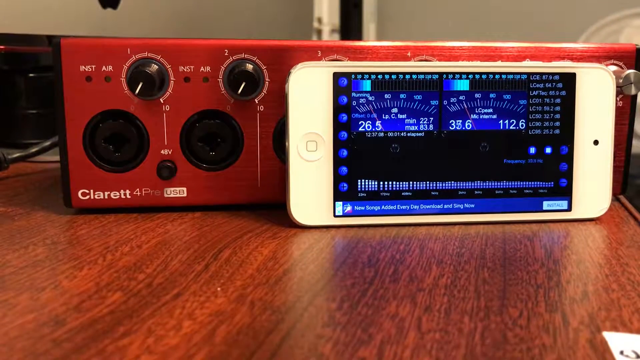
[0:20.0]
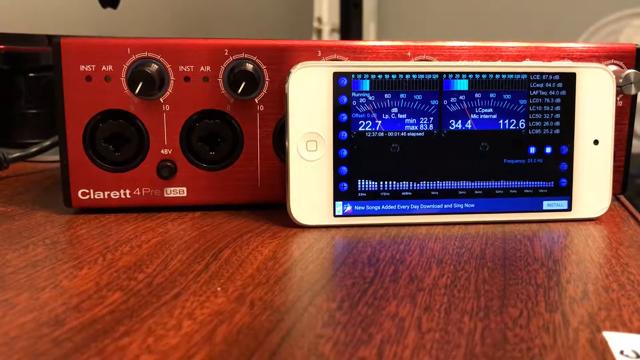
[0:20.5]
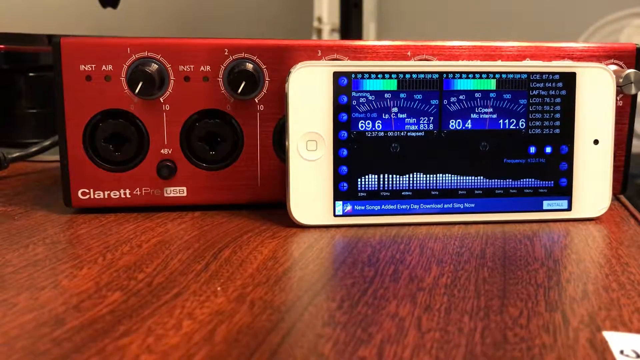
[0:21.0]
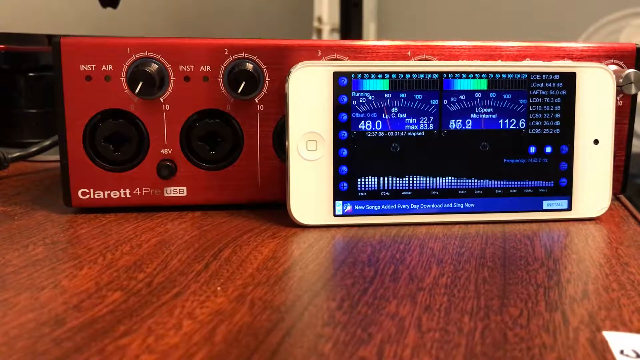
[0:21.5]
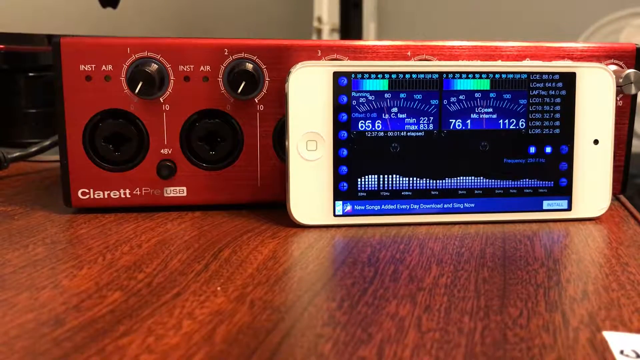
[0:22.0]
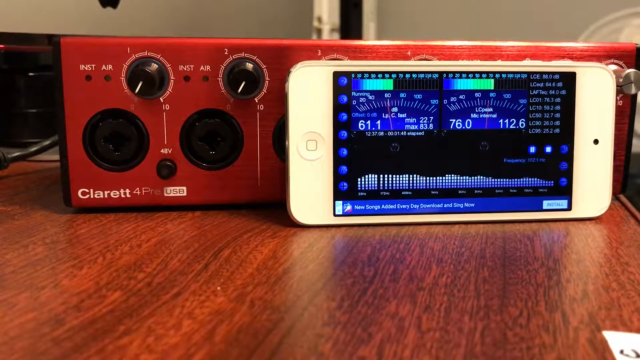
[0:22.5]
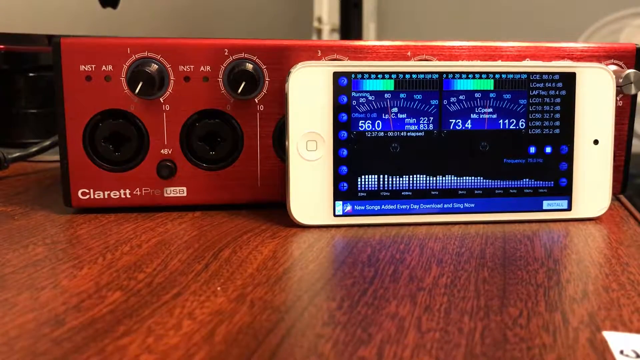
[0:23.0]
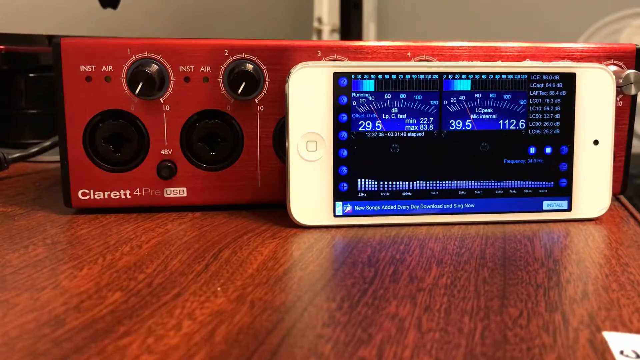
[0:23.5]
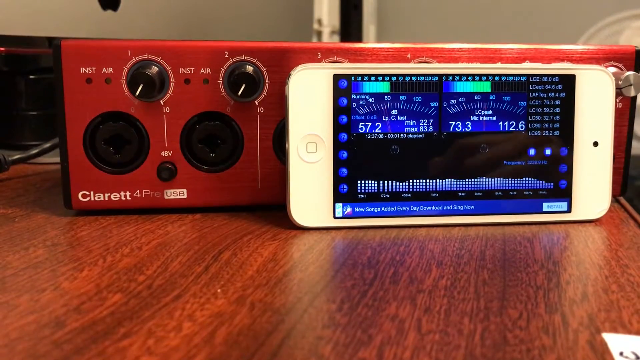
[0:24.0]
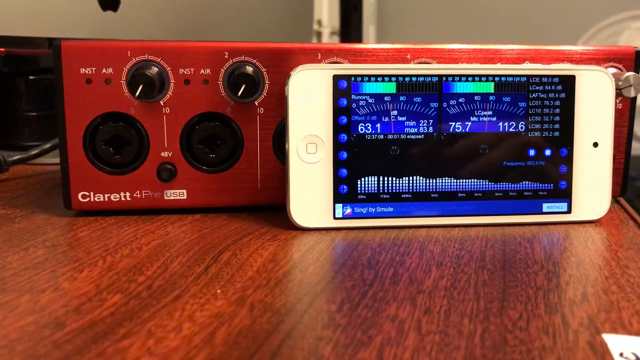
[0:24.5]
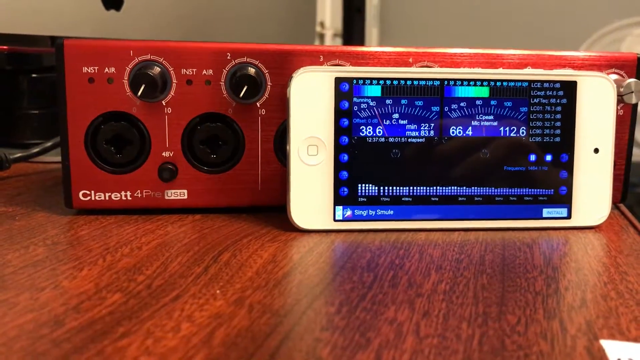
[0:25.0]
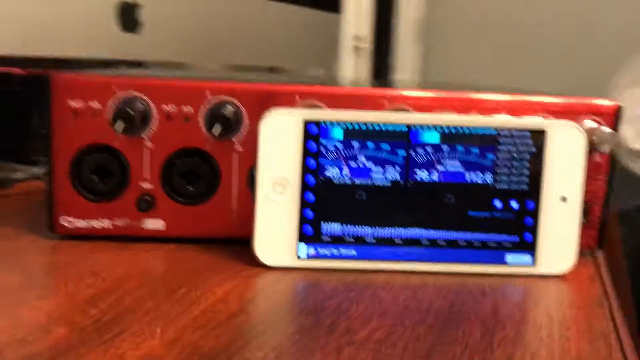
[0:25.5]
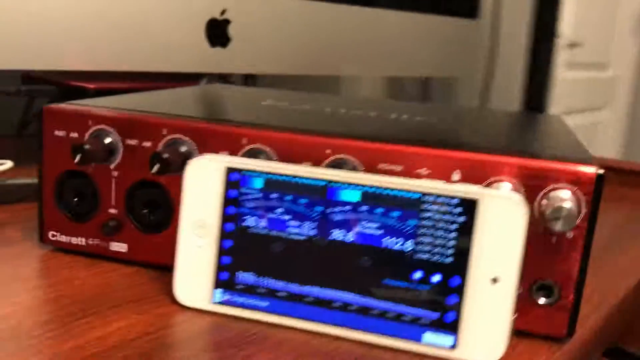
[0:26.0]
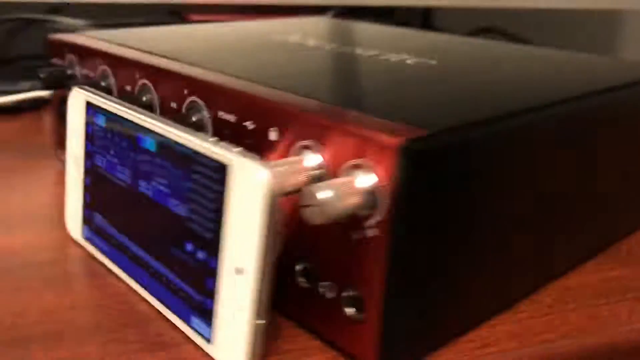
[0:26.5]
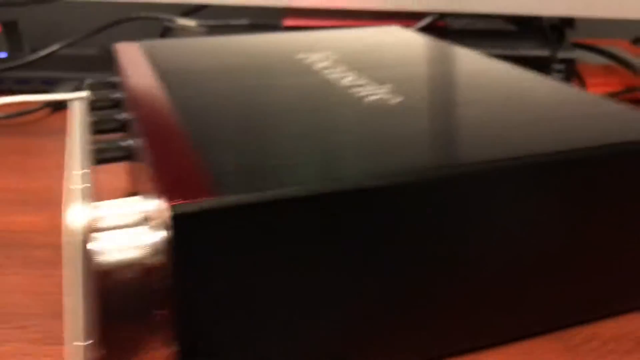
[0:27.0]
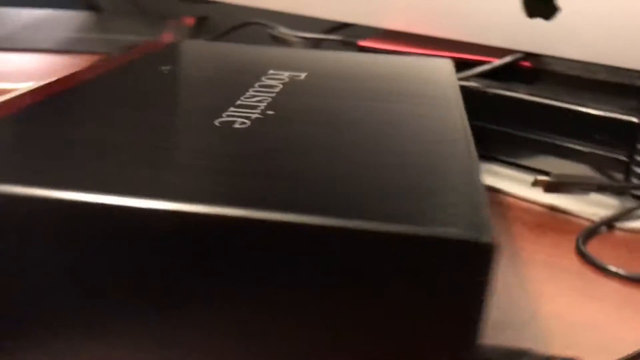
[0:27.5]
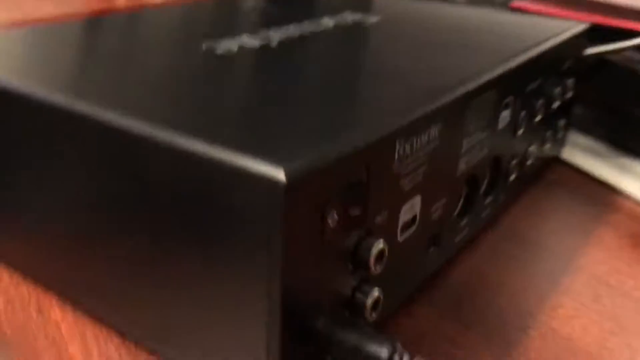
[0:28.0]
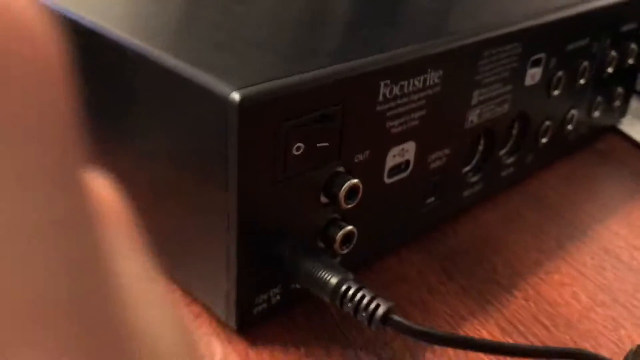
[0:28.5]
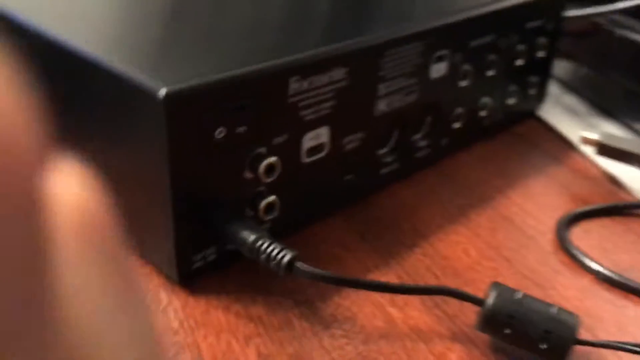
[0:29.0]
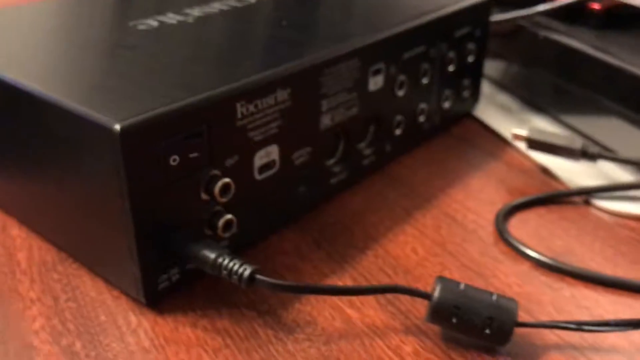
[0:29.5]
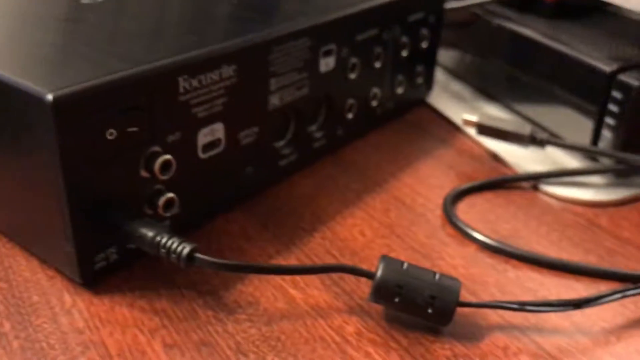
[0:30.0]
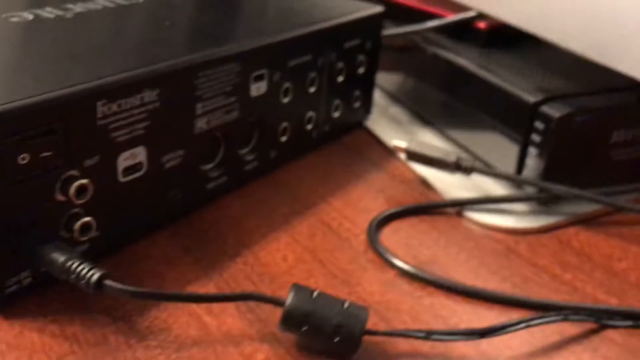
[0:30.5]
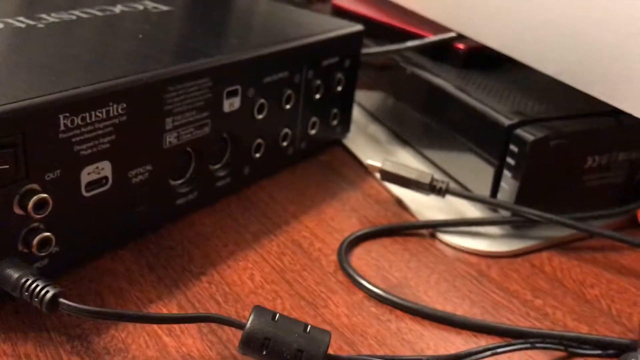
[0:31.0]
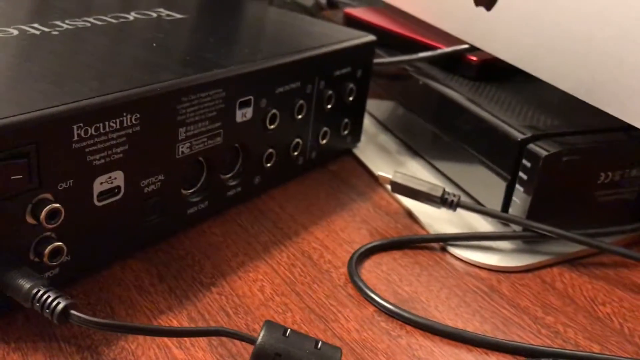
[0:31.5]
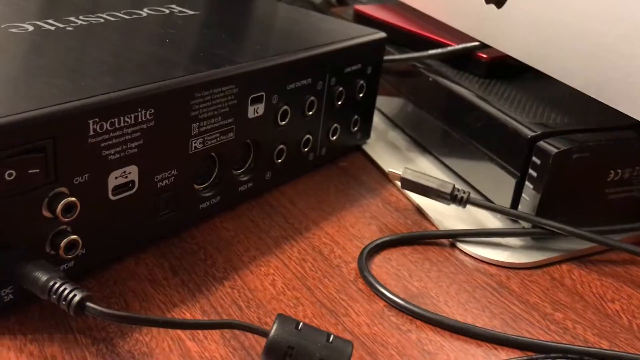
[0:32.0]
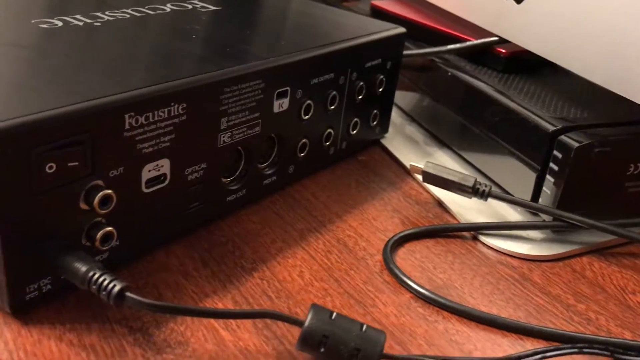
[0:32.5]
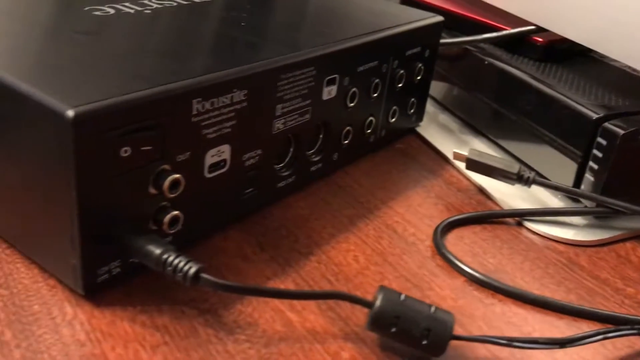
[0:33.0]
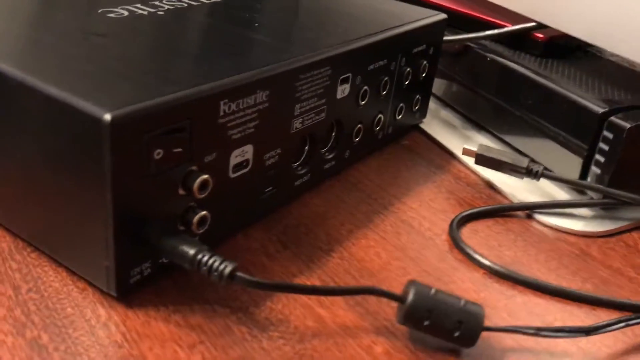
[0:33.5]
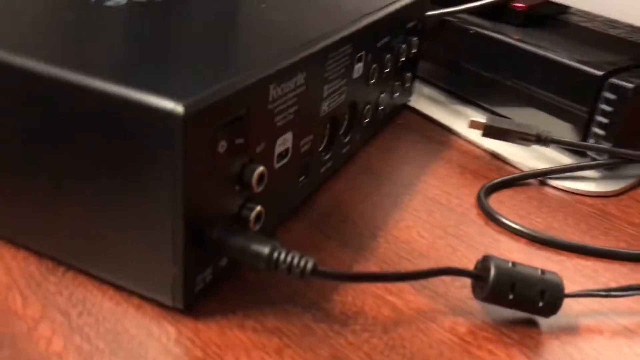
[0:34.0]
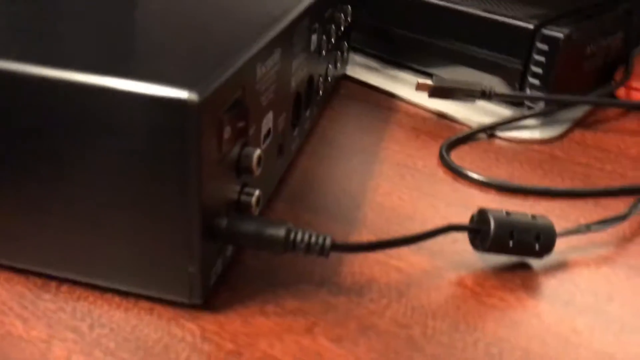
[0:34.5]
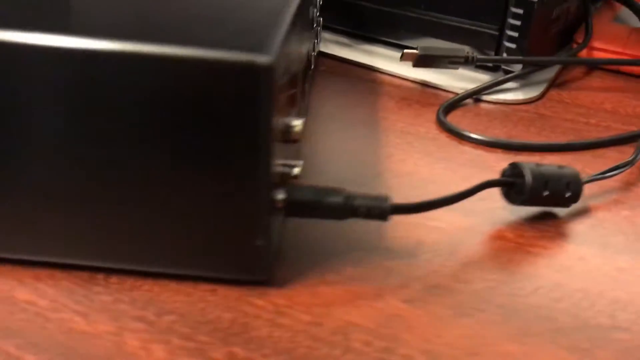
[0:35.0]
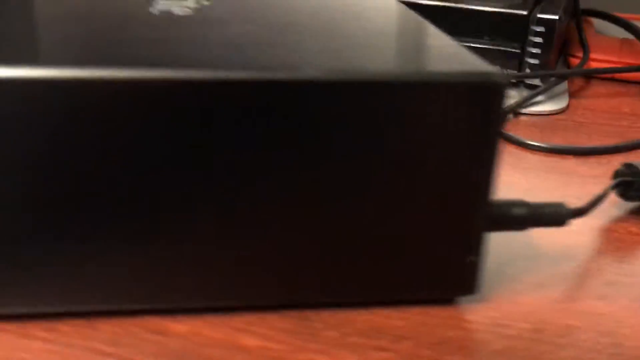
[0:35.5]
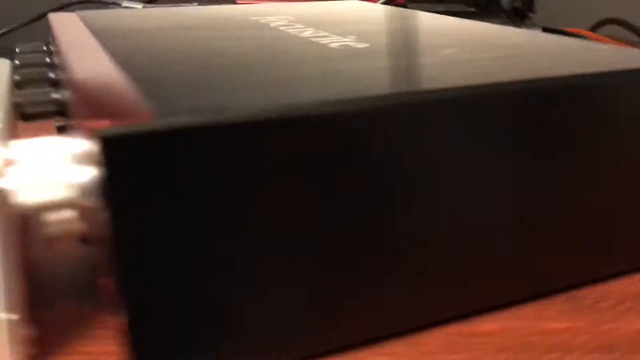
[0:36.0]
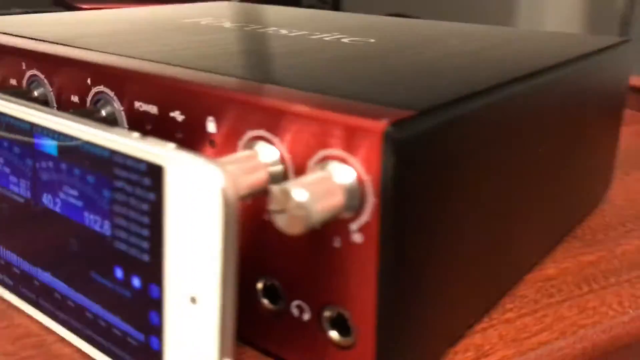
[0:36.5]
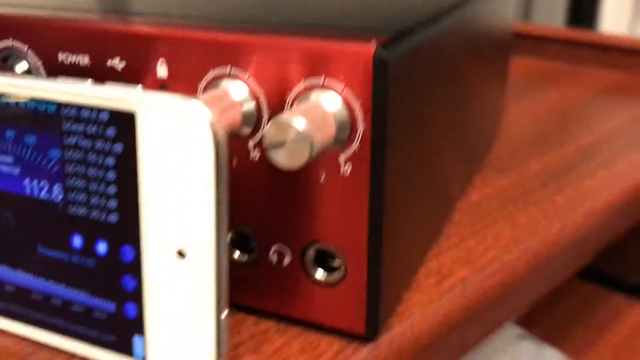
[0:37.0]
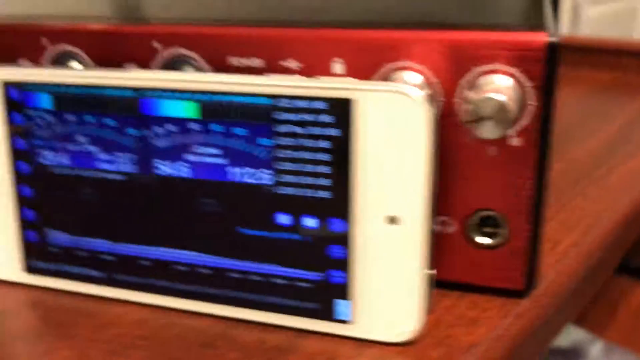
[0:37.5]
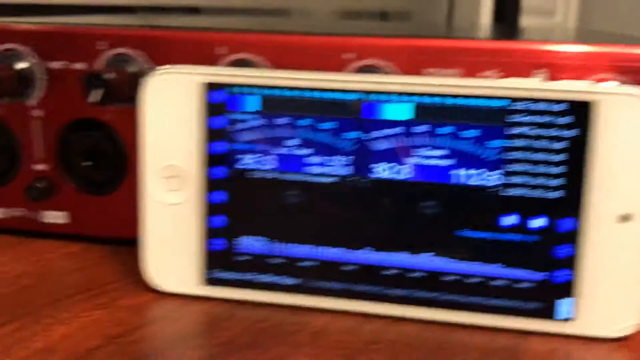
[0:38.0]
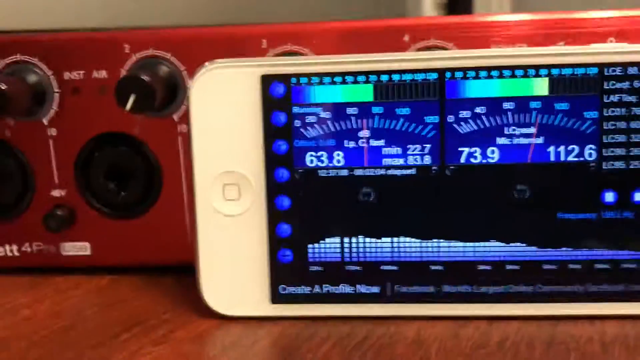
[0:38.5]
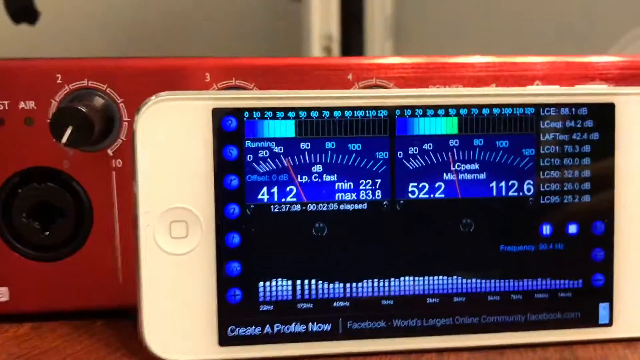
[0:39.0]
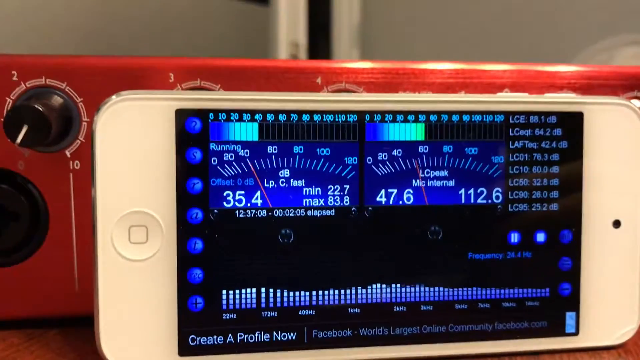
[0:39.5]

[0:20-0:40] The white, older-model iPhone is lying on its side running an app that apparently detects music. There are two gauges whose needle moves up and down between 60 and 80, and two bars across the top go up and down, peaking and dropping back. Text at the bottom reads "new songs added every day, download and sing now." Behind the iPhone is another piece of music recording equipment, red with black buttons. The camera pans around to the back of the red and black box, showing that it is plugged in with a USB cord, as the "USB" on the front of the machine indicates. The camera then pans back around to the front, showing the machine and the iPhone again.